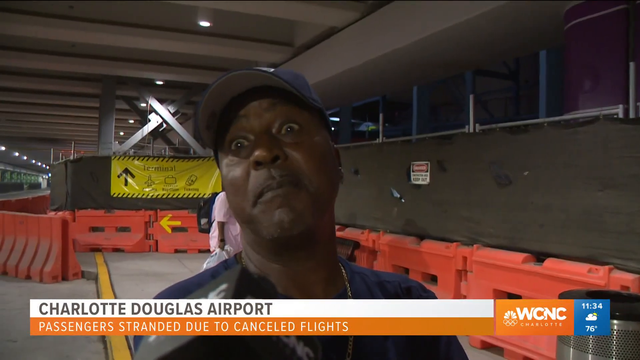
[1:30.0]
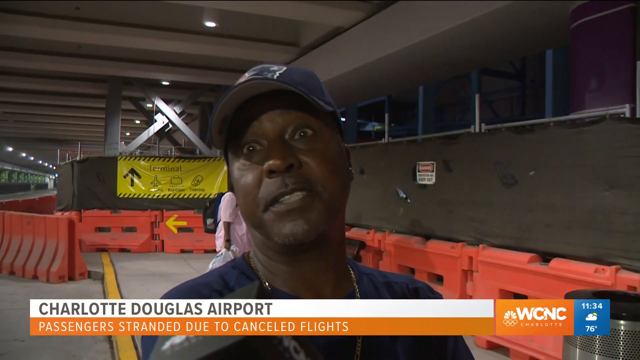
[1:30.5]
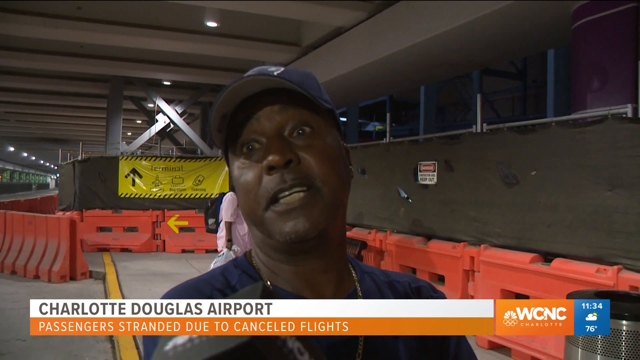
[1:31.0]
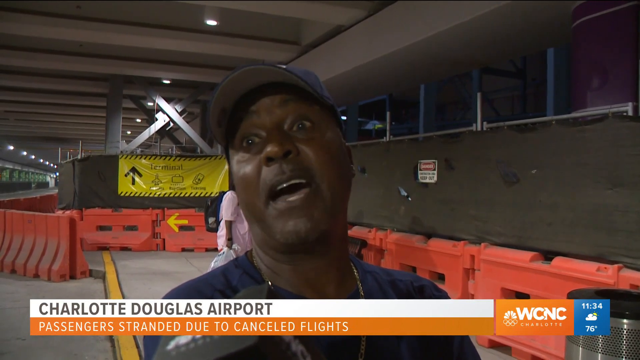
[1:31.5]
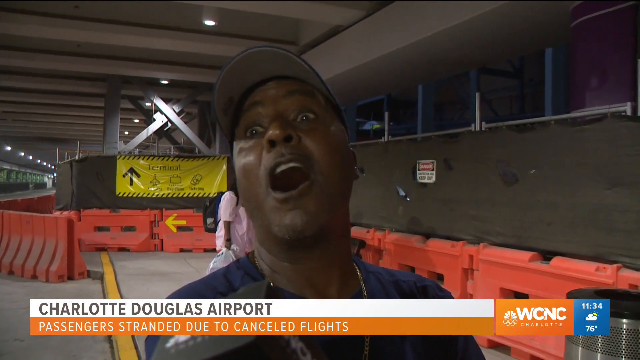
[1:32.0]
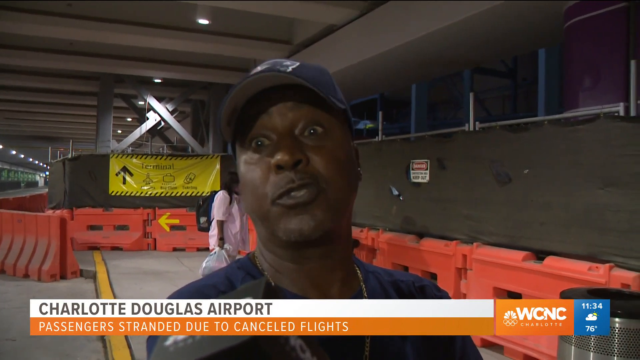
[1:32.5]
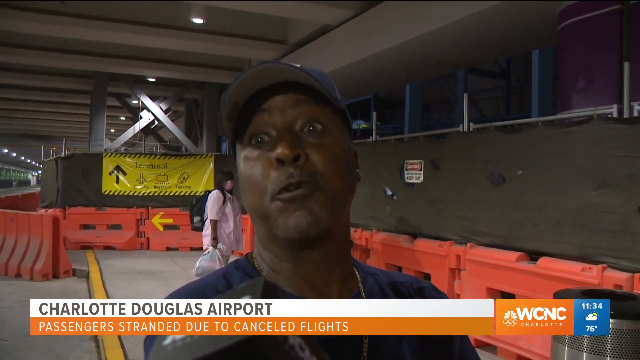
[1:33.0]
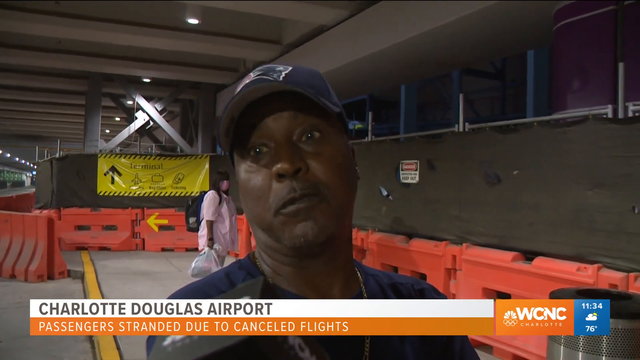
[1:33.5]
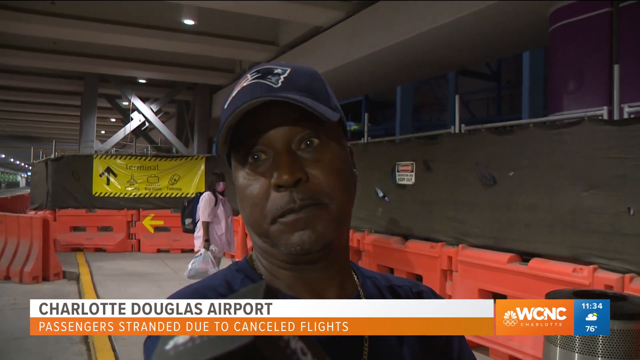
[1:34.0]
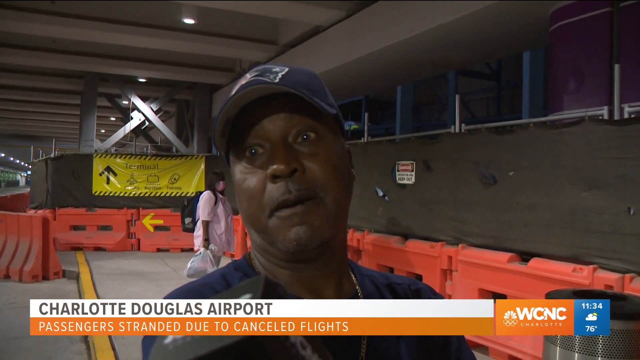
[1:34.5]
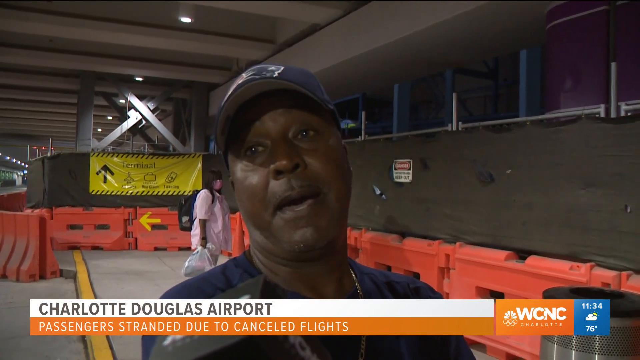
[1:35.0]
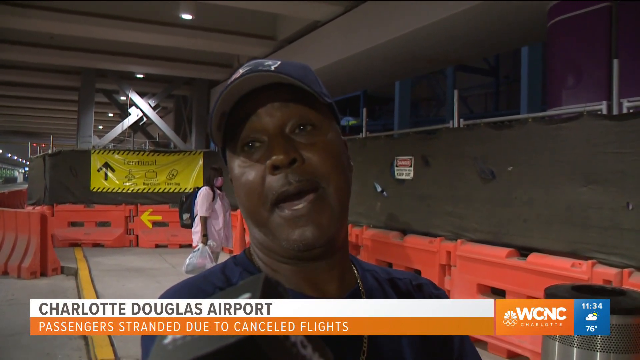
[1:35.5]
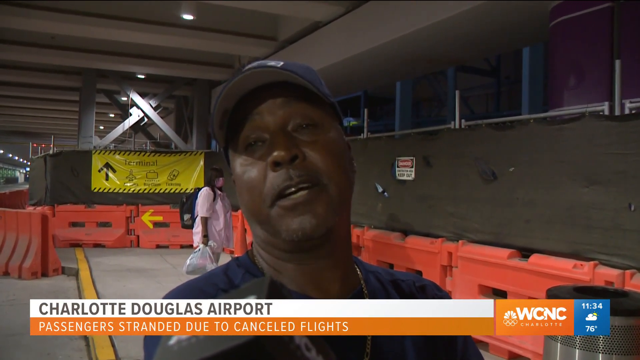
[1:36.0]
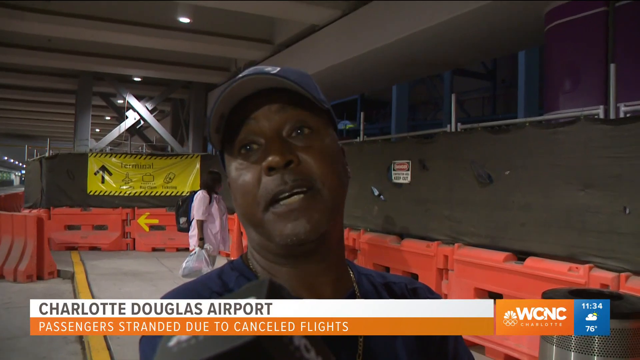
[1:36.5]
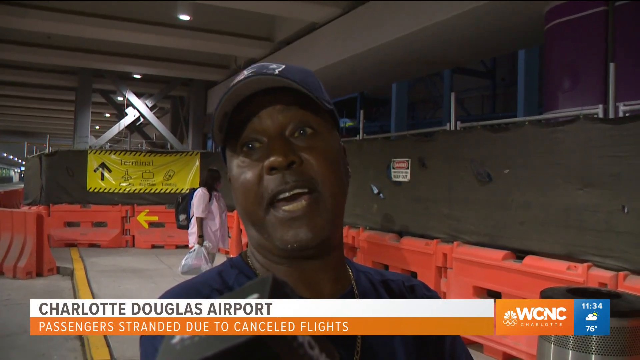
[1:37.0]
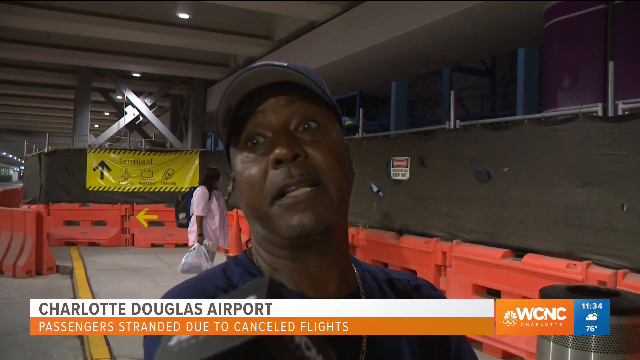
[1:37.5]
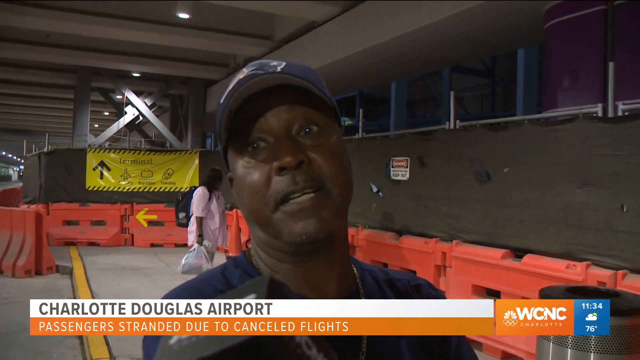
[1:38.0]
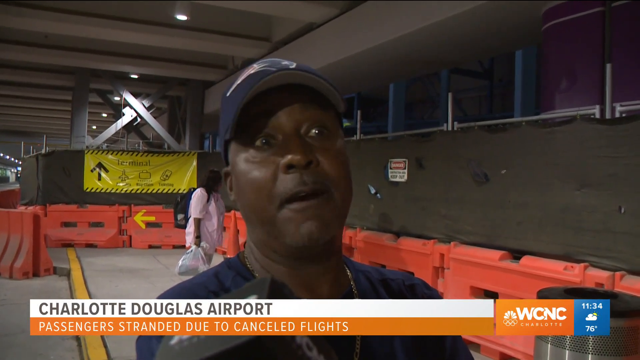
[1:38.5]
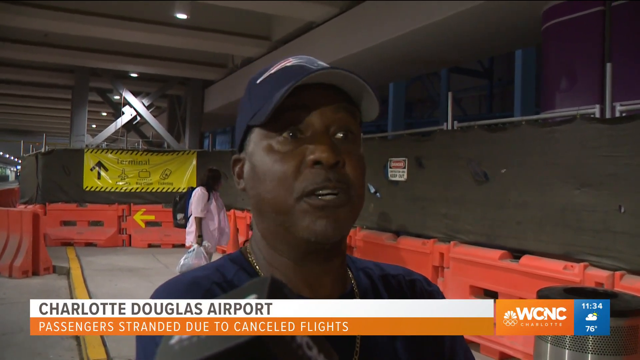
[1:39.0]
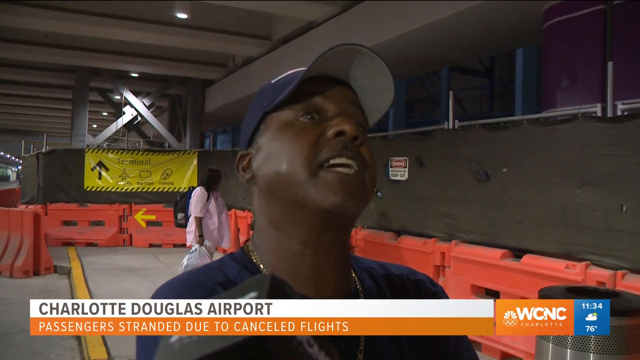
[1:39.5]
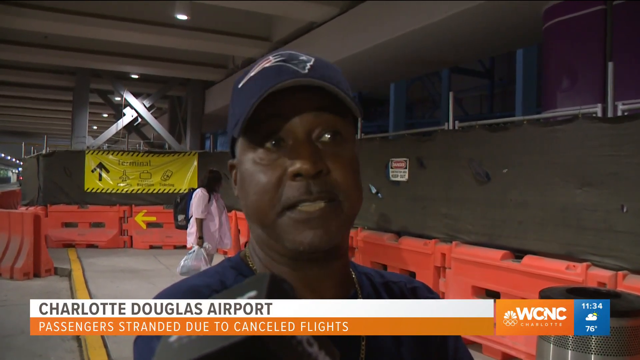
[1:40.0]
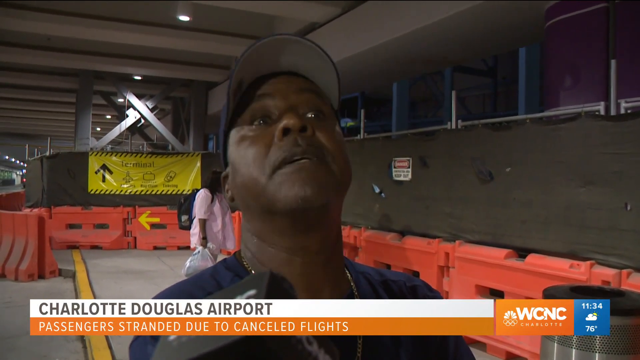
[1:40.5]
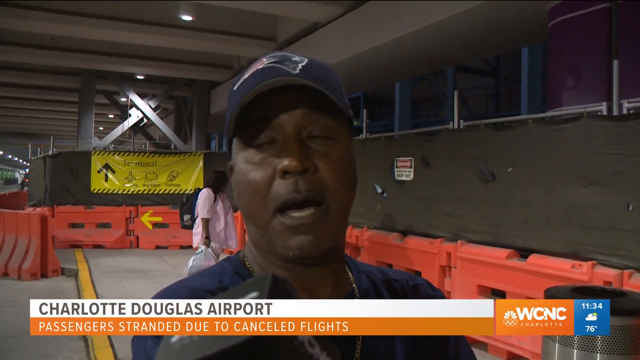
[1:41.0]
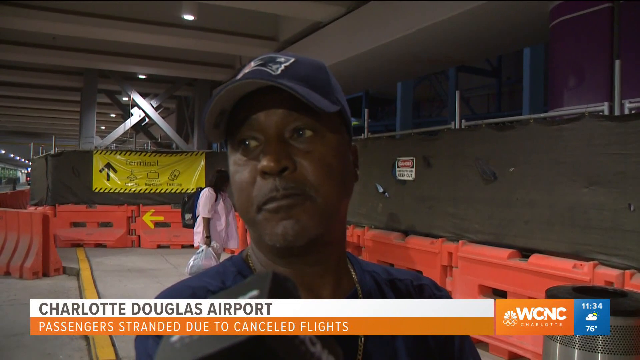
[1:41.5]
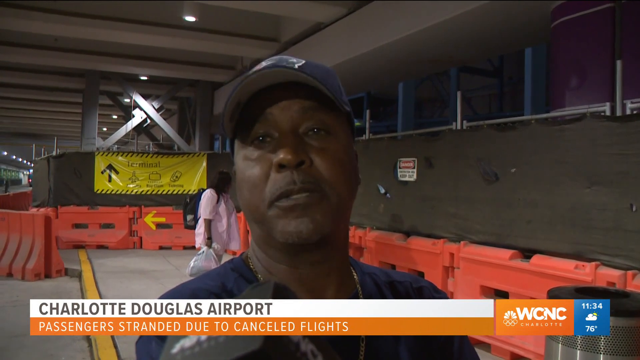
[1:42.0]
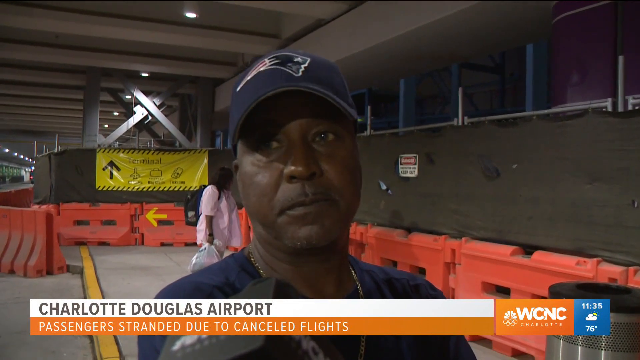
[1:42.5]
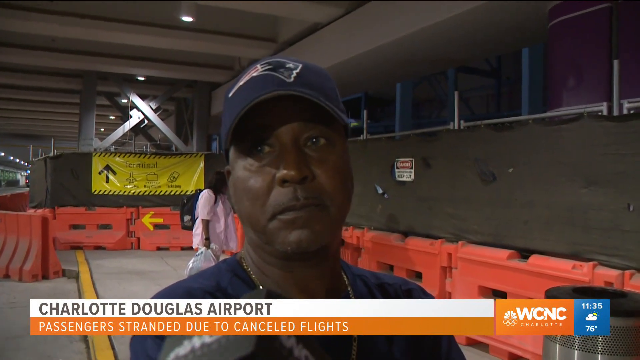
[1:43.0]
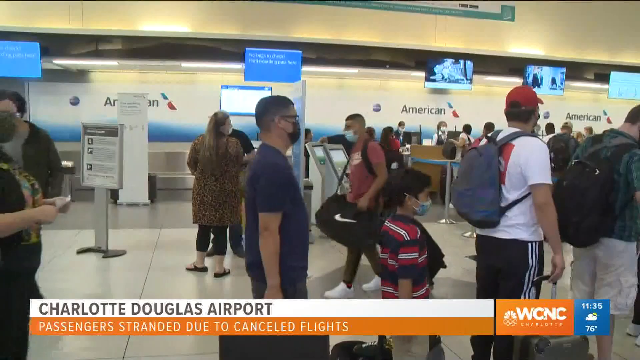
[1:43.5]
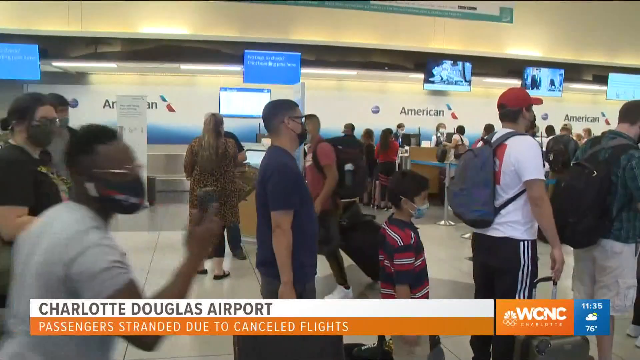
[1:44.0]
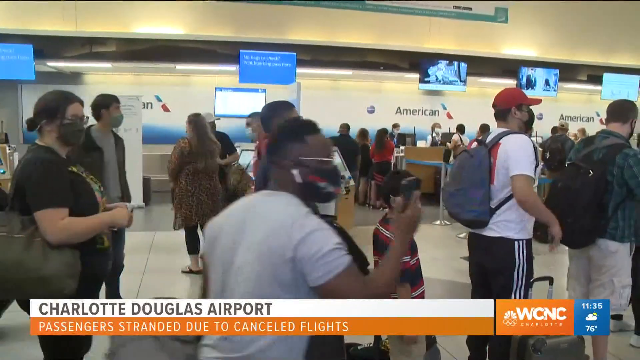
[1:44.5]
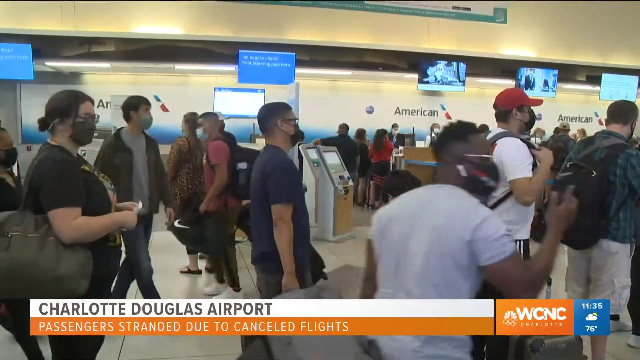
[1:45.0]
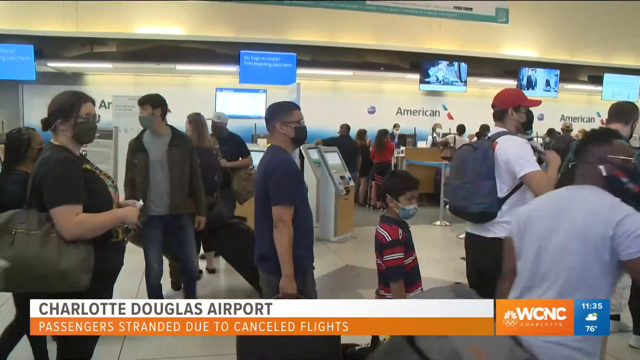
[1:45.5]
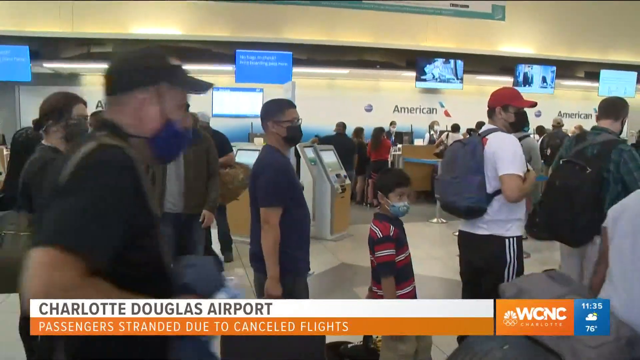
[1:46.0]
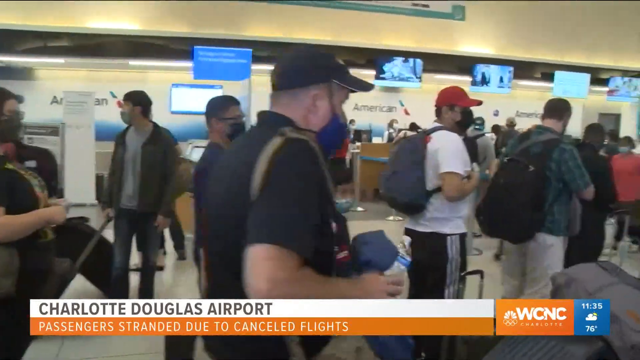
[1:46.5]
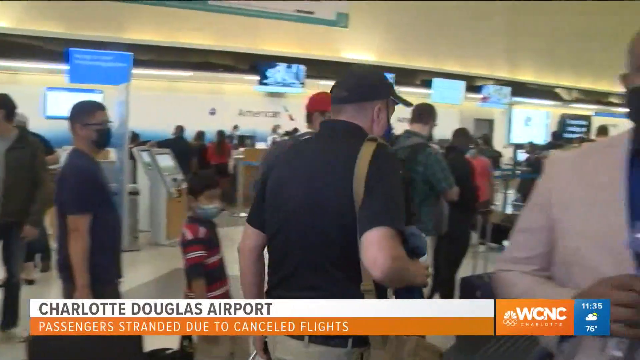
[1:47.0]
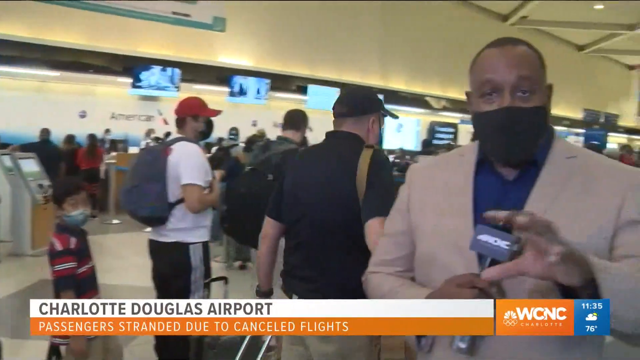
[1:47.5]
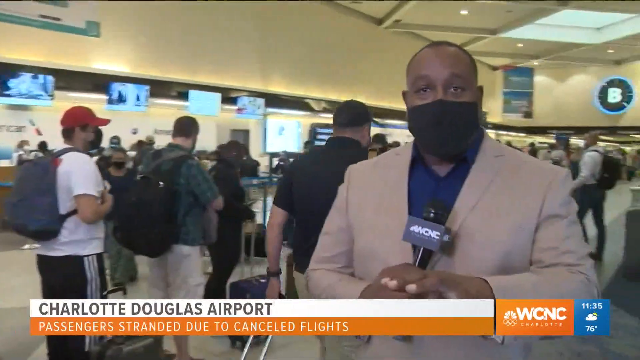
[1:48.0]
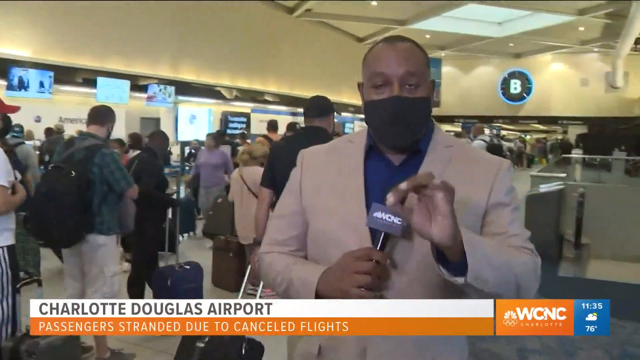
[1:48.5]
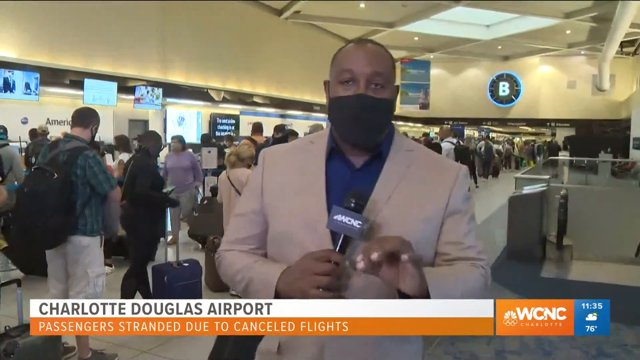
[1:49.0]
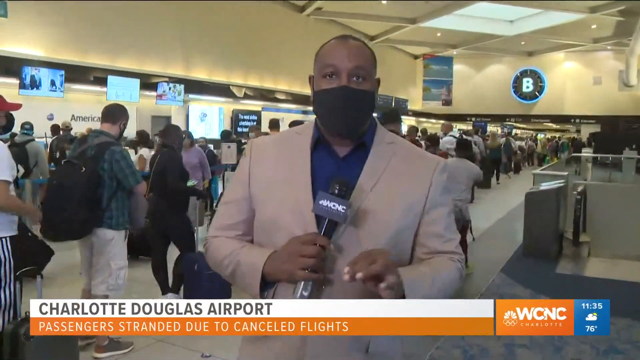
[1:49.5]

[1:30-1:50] The scene is Douglas Airport, where passengers are affected by canceled flights.